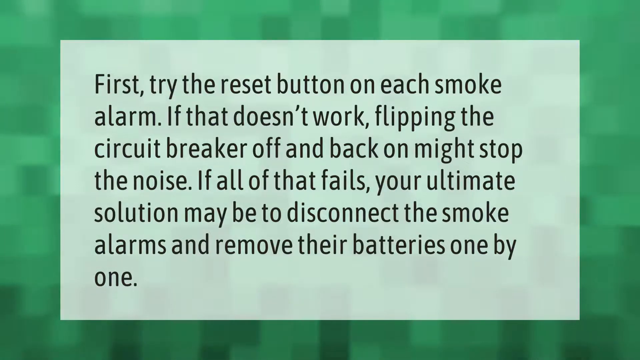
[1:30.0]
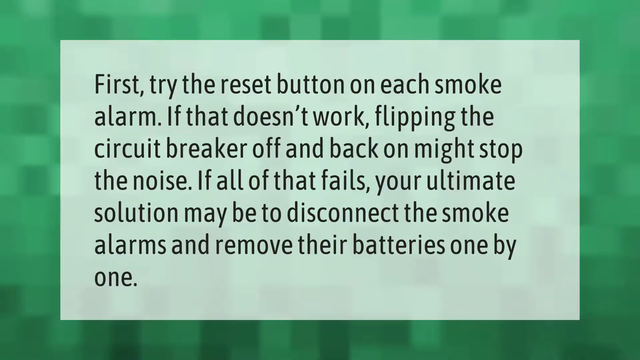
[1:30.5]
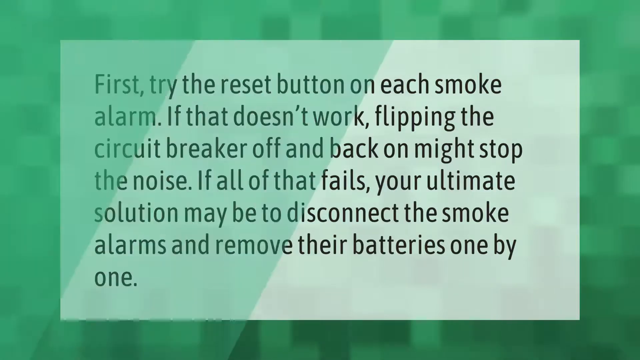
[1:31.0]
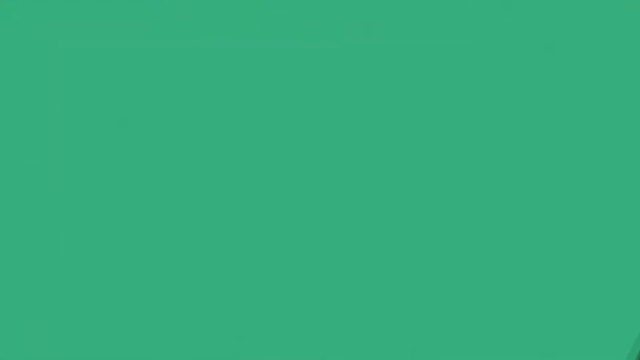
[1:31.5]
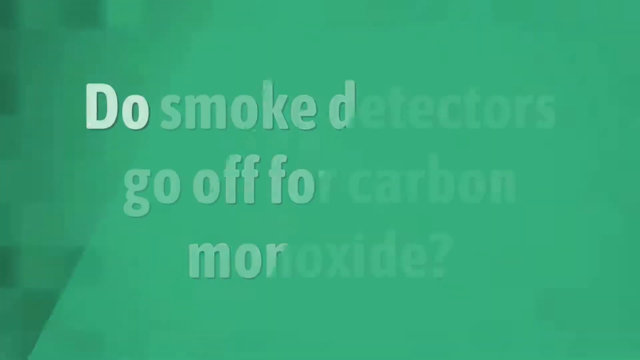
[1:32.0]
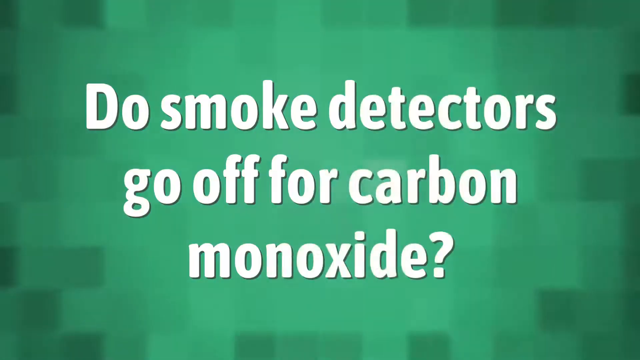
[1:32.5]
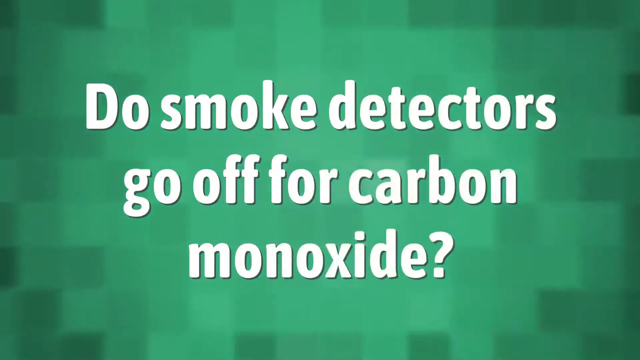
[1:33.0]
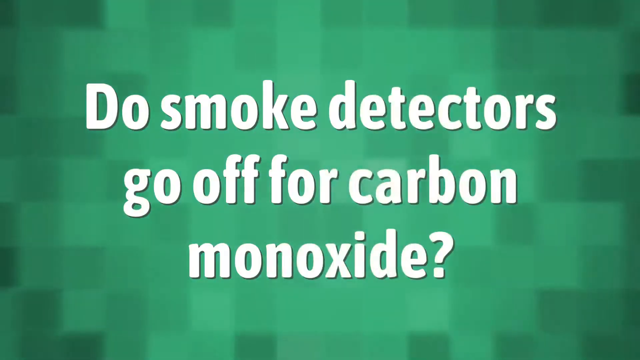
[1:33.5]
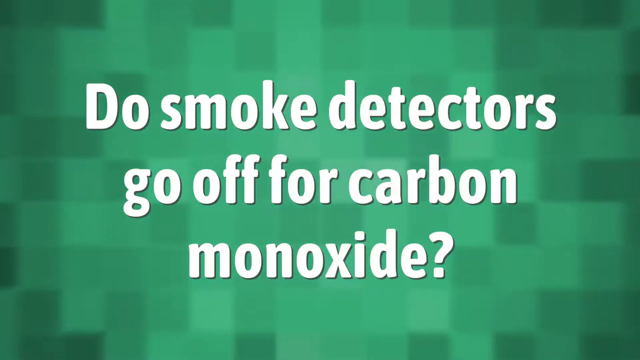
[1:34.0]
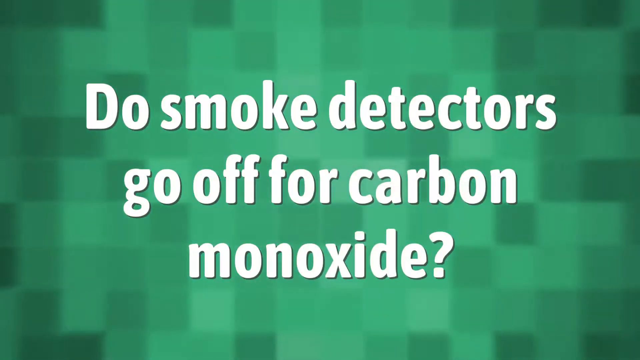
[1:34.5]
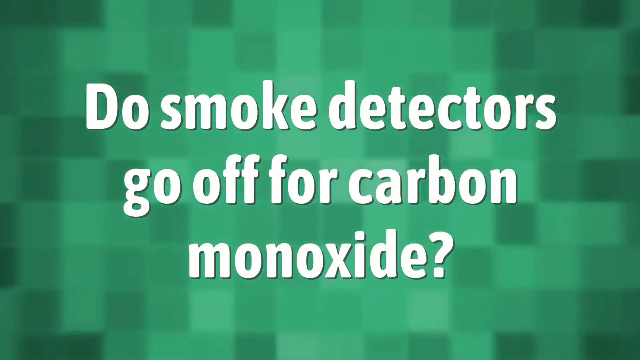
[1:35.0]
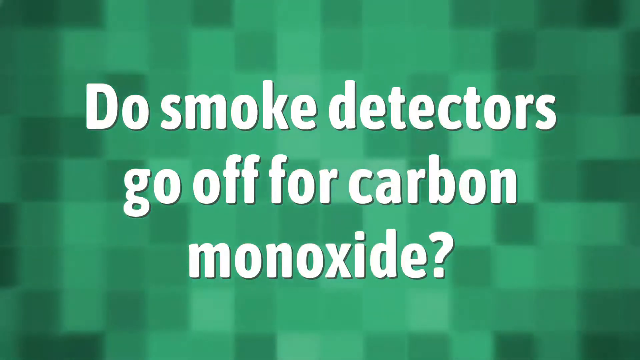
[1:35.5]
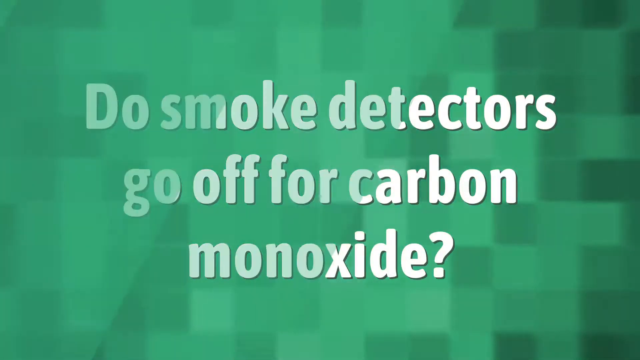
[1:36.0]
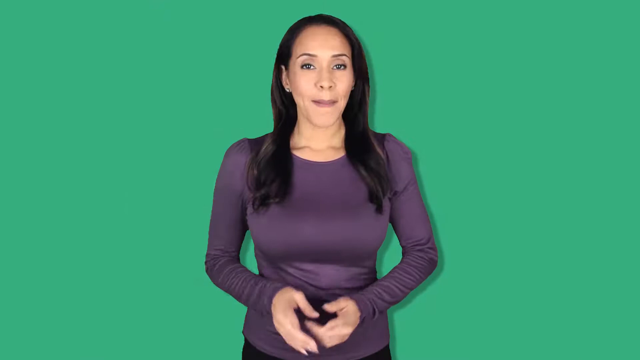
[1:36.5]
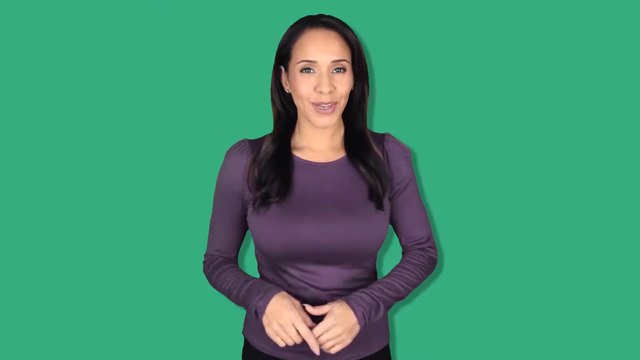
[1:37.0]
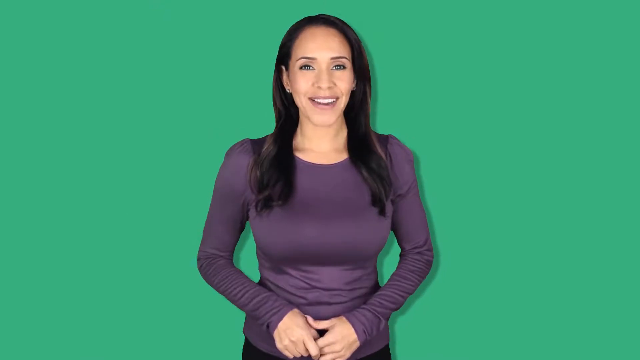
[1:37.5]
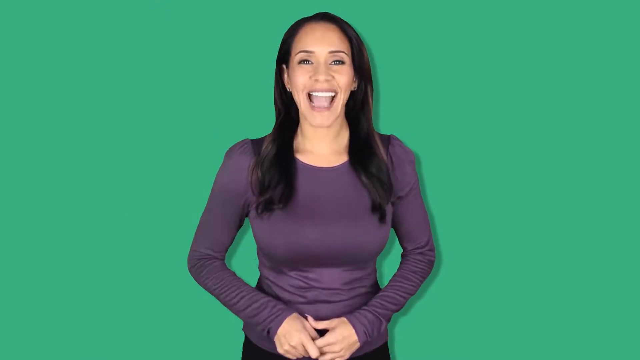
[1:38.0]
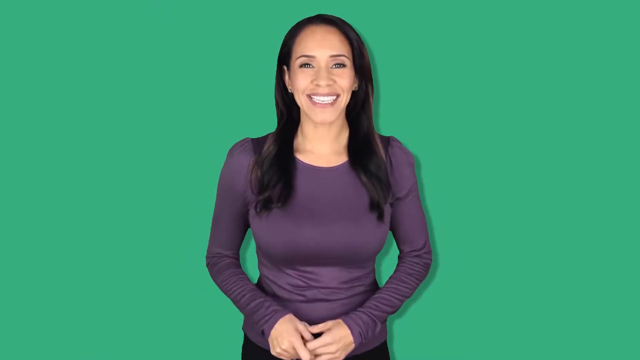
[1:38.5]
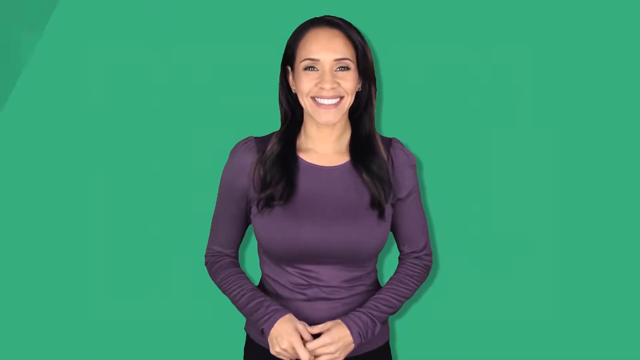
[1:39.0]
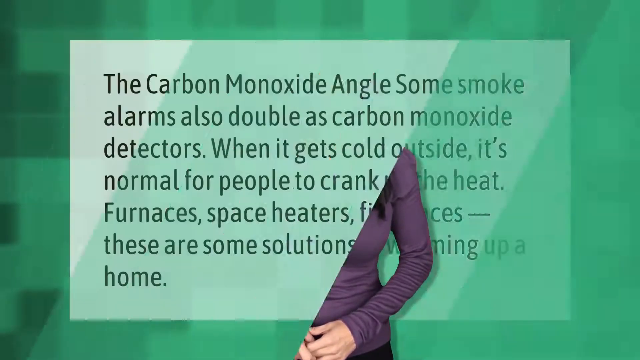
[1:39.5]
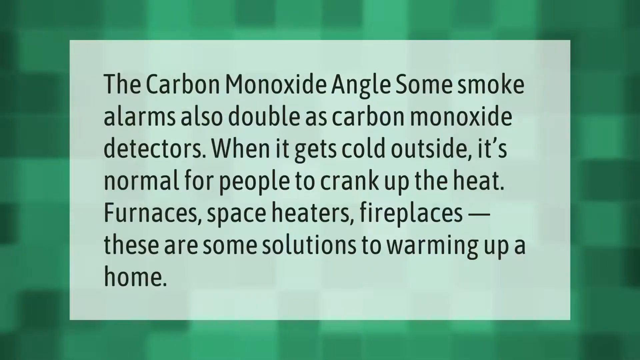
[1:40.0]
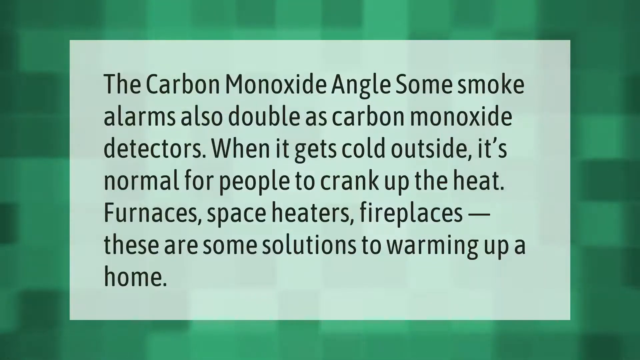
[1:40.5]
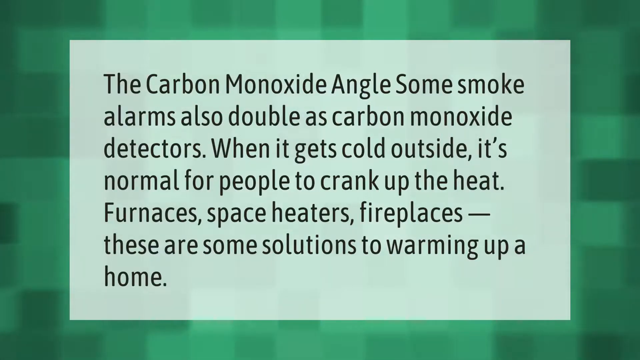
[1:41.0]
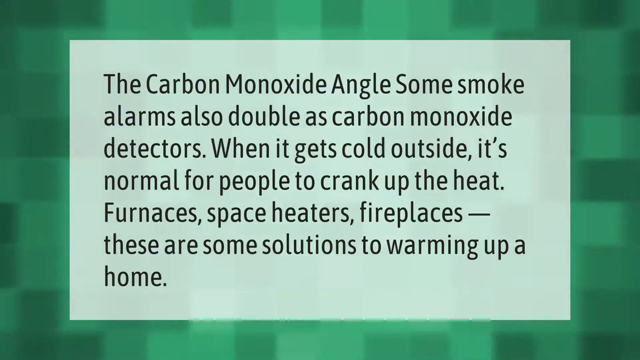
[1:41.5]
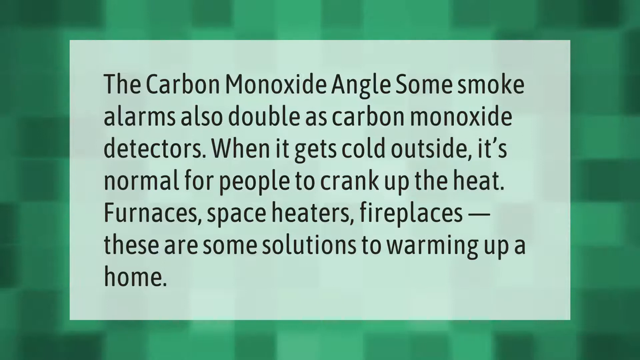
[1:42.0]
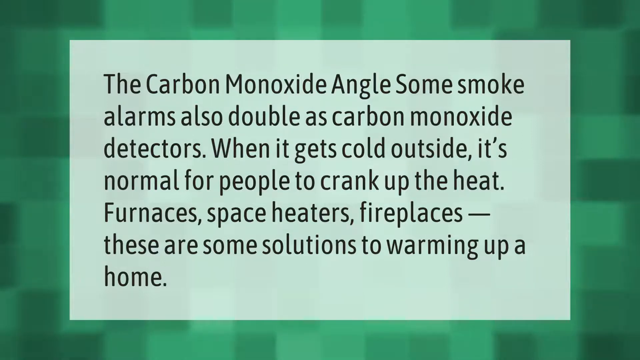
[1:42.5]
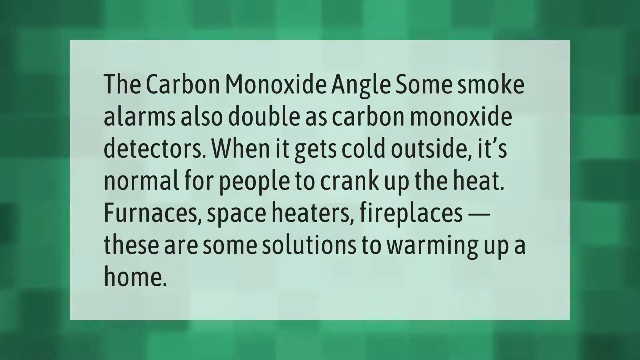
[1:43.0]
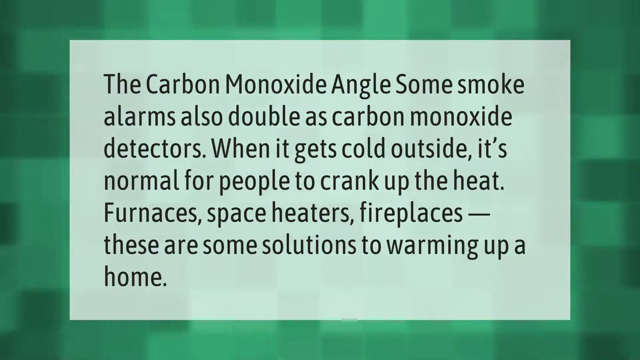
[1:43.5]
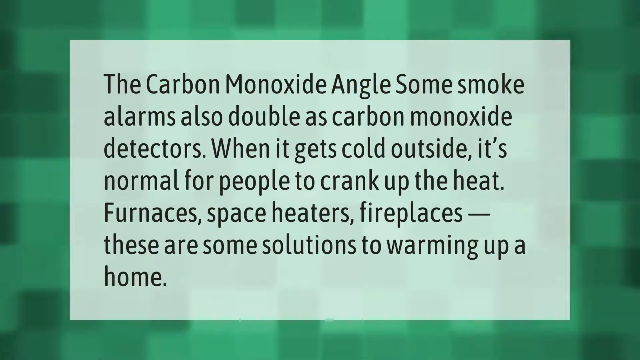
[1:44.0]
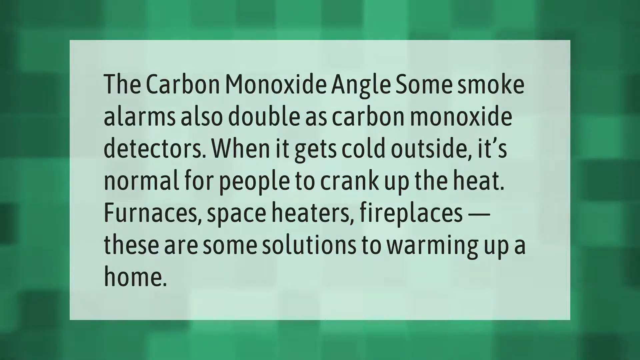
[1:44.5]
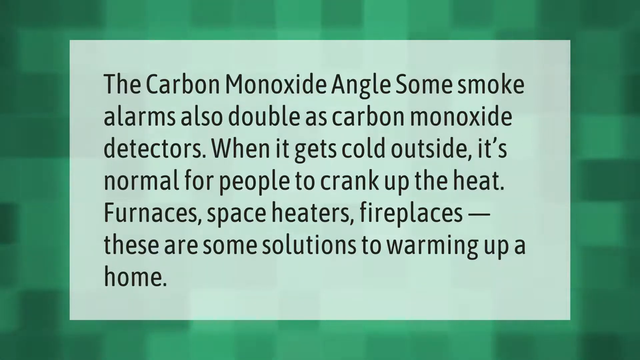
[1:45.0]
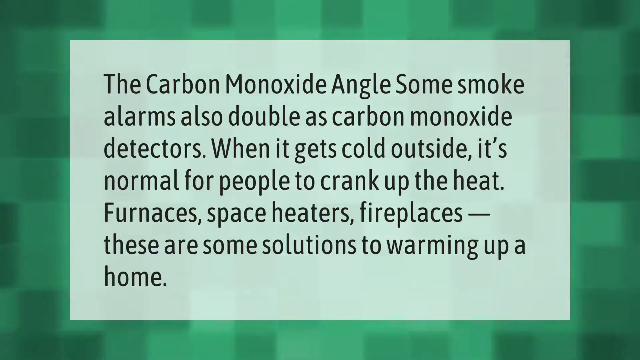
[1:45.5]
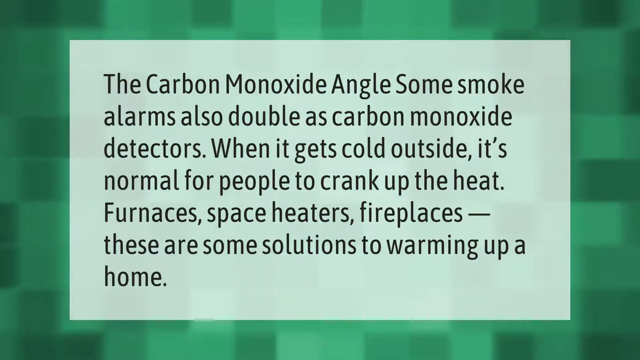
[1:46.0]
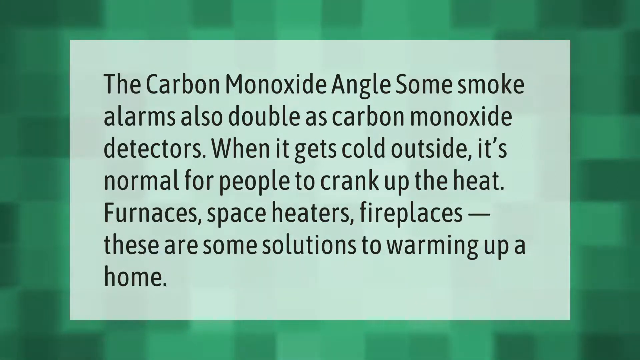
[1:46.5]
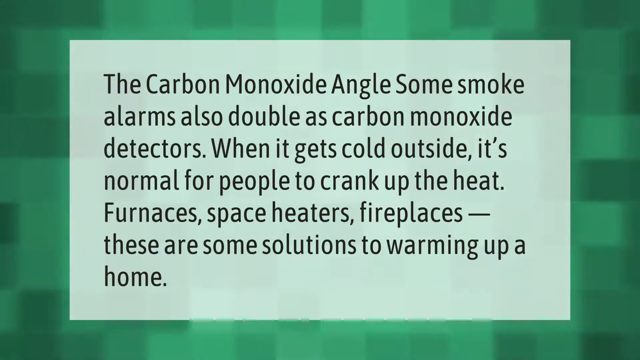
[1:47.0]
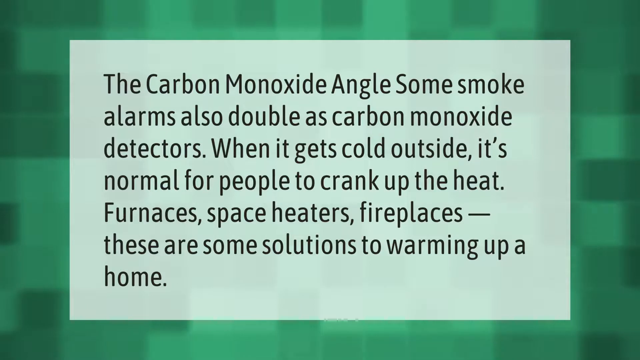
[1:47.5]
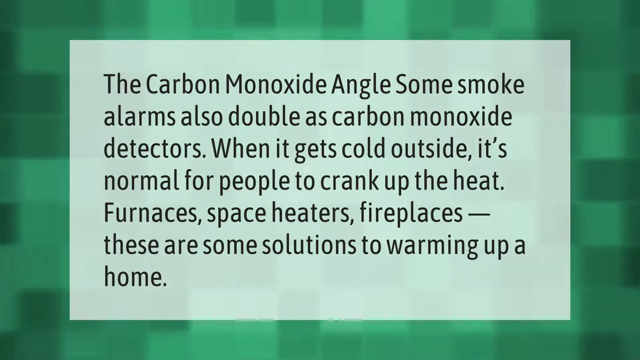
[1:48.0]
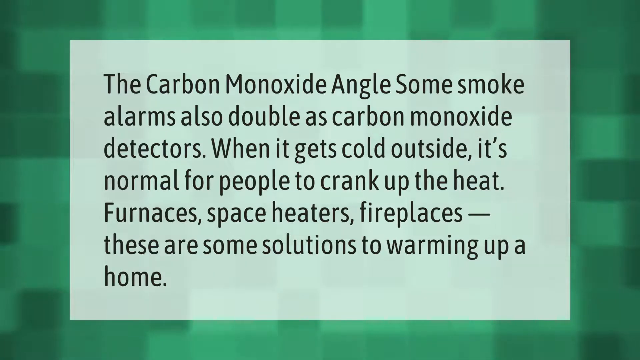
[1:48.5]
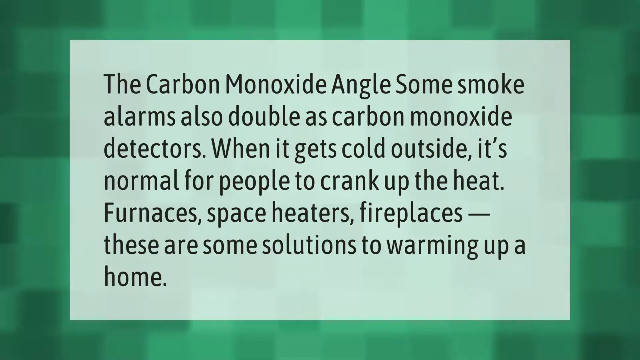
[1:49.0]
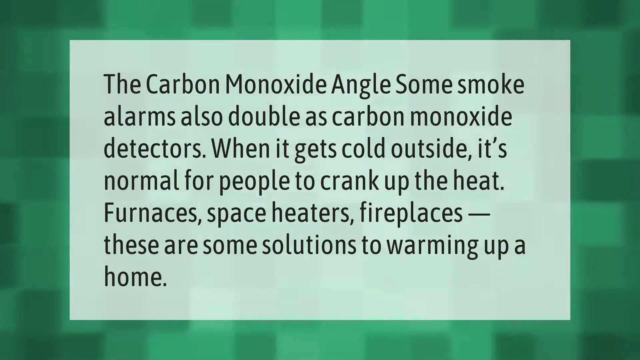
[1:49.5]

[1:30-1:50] A green screen says "Do smoke detectors go off for carbon monoxide?" The woman, in a green shirt and purple top, speaks intently toward the screen. Then another screen with a green background and a lighter green front says "The carbon monoxide angle. Some smoke alarms also double as carbon monoxide detectors. When it gets cold outside, it's normal for people to crank up the heat. Furnaces, space heaters, fireplaces. These are some solutions to warming up a home." It pauses on this screen for a moment.